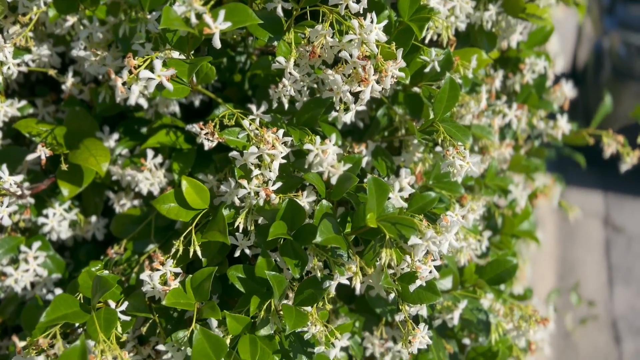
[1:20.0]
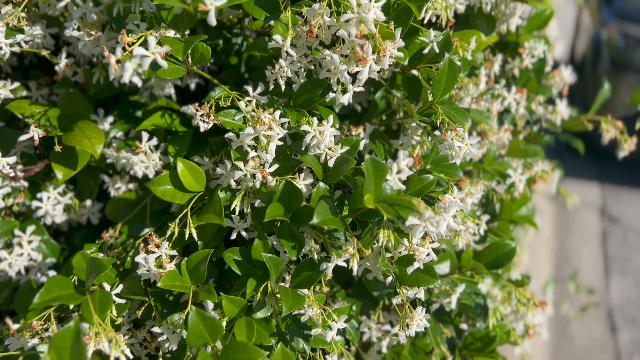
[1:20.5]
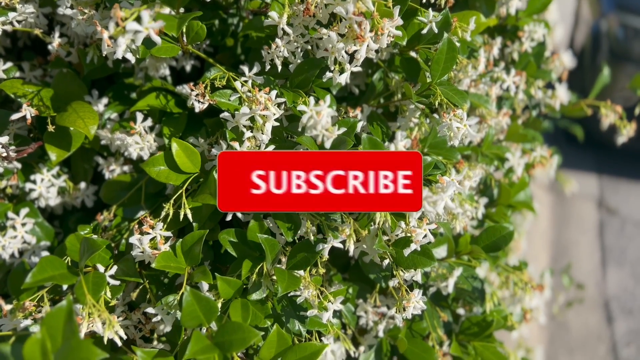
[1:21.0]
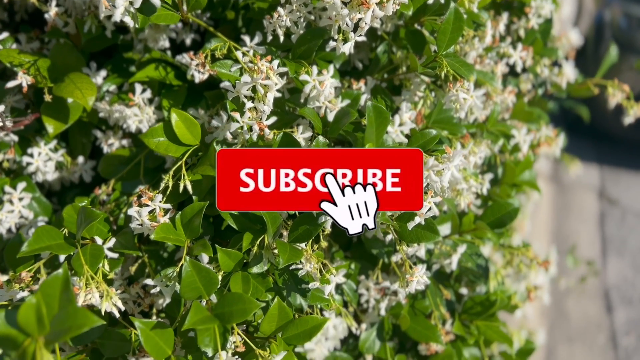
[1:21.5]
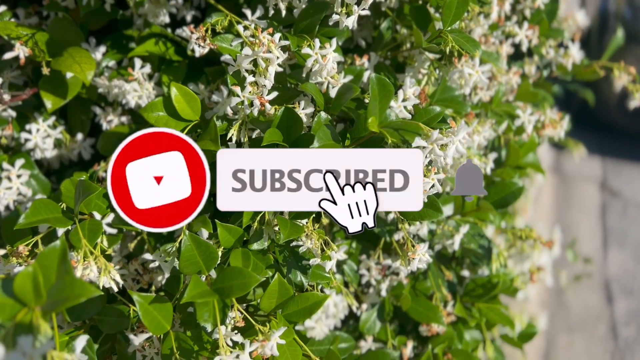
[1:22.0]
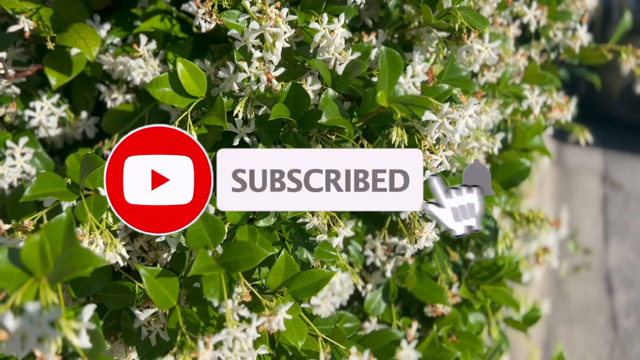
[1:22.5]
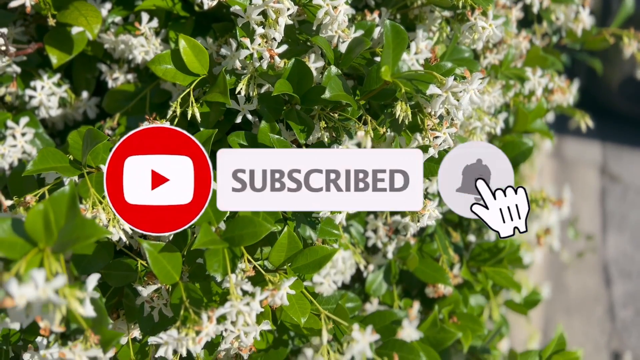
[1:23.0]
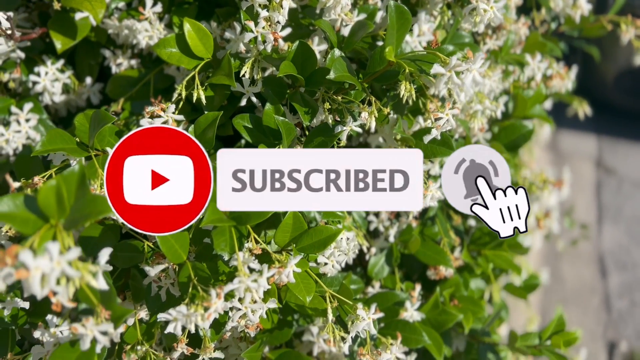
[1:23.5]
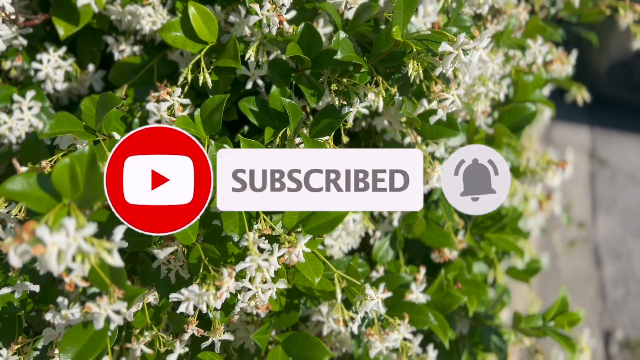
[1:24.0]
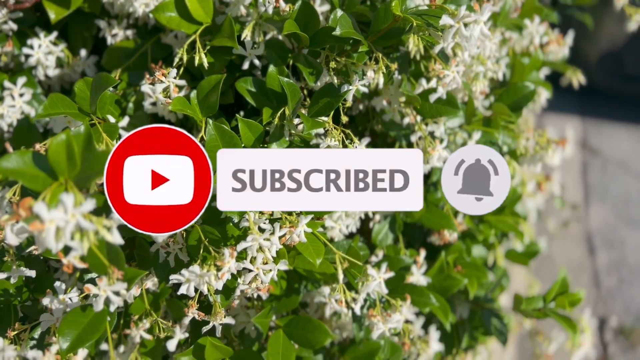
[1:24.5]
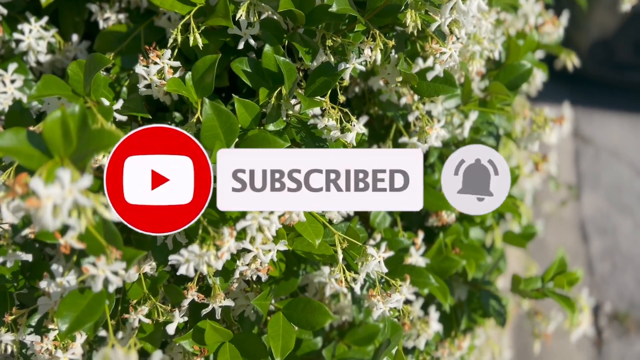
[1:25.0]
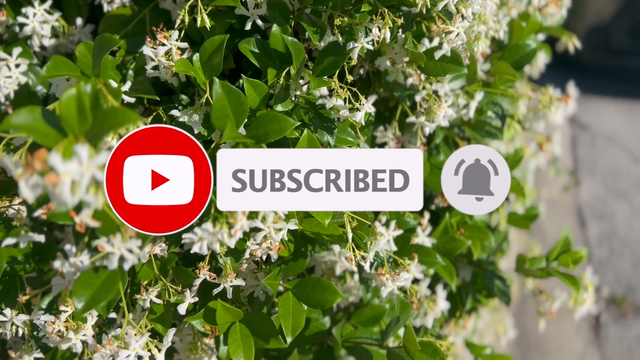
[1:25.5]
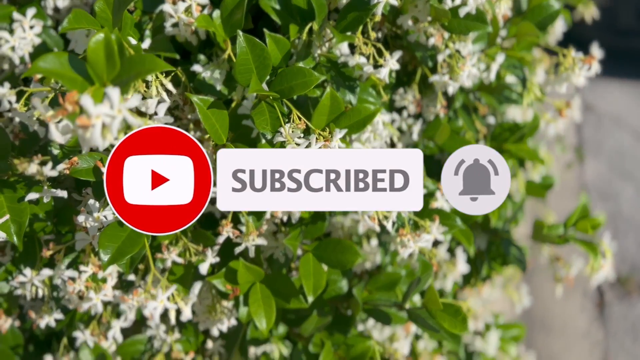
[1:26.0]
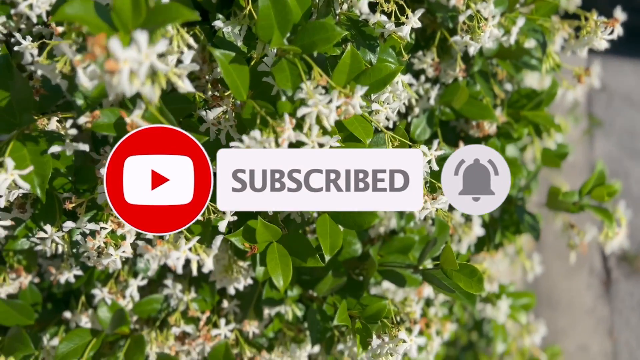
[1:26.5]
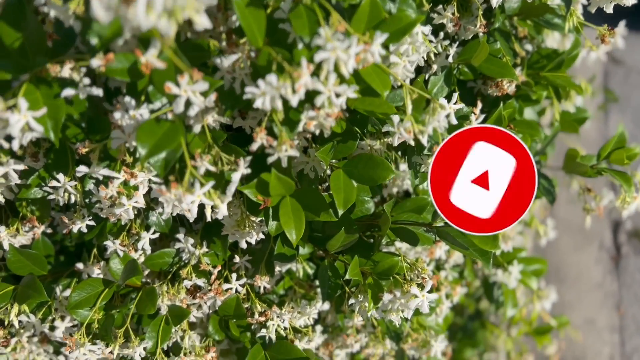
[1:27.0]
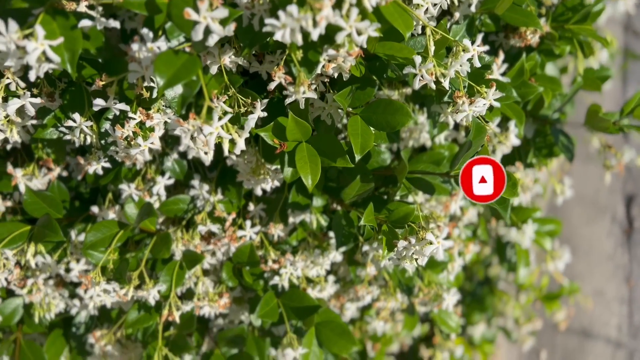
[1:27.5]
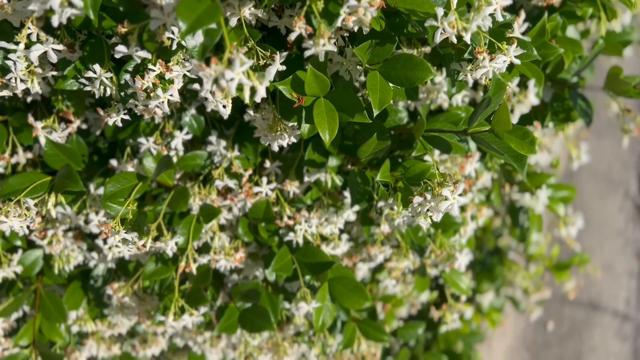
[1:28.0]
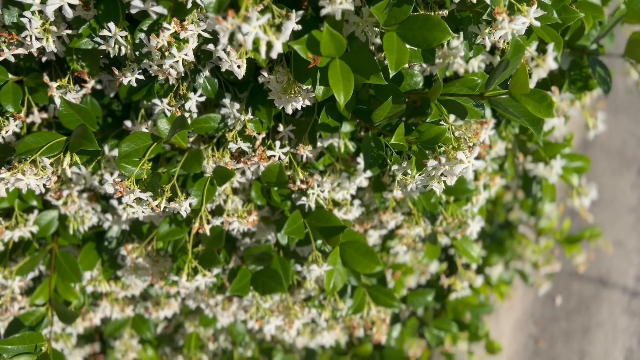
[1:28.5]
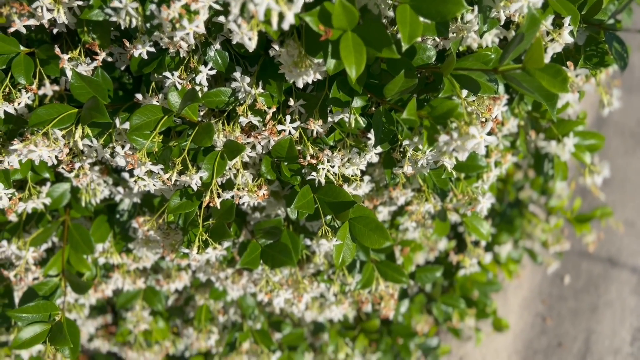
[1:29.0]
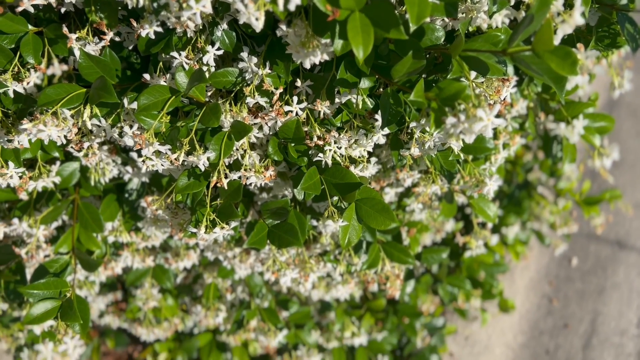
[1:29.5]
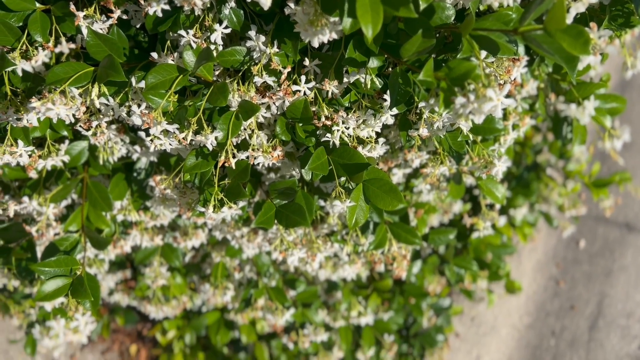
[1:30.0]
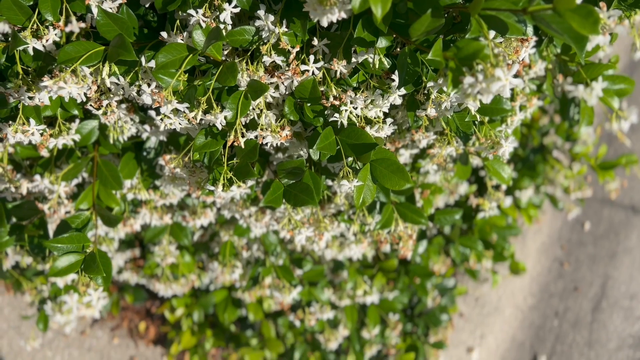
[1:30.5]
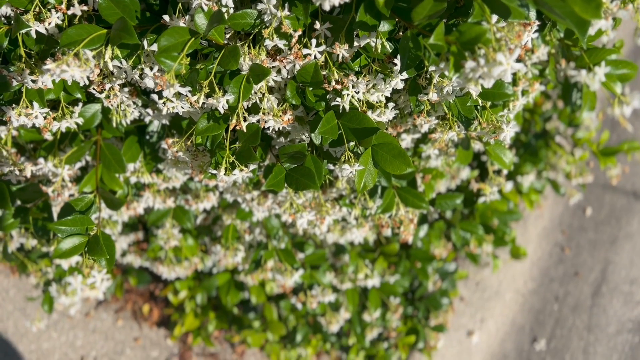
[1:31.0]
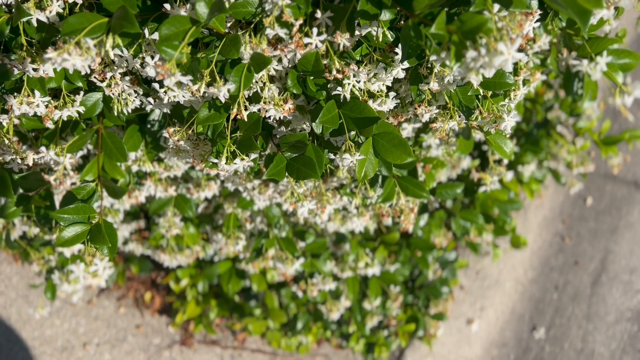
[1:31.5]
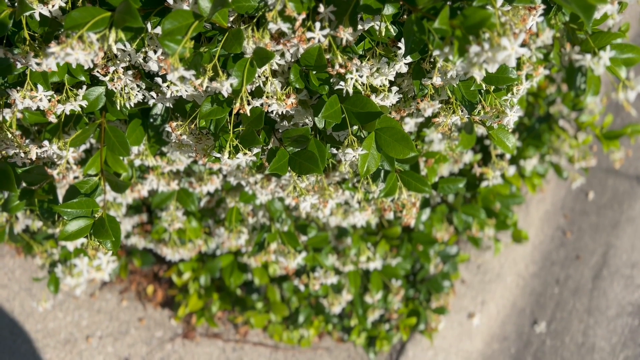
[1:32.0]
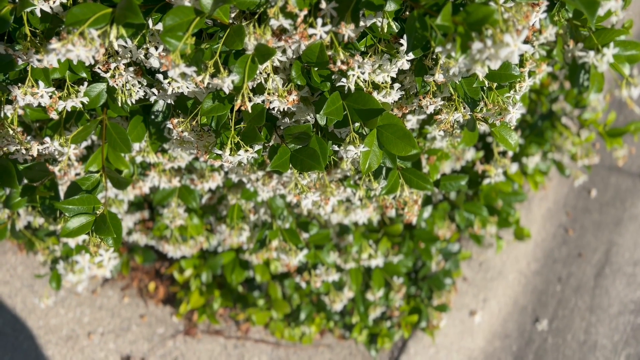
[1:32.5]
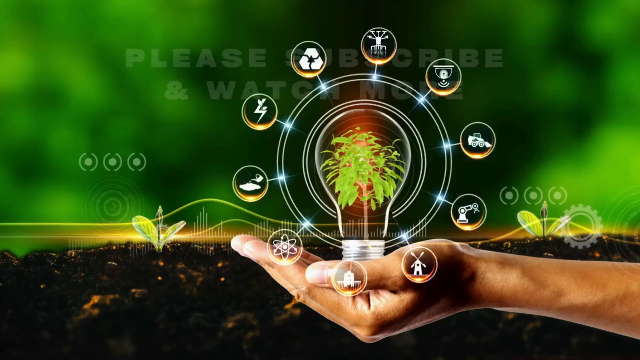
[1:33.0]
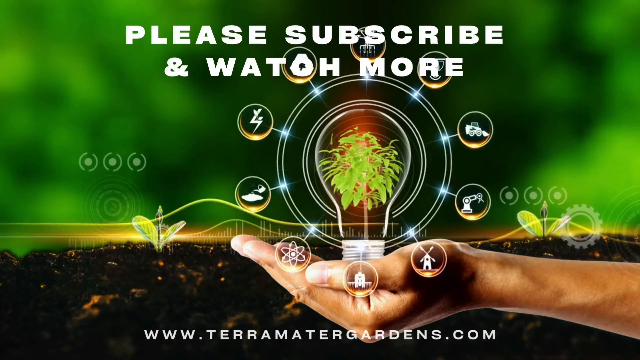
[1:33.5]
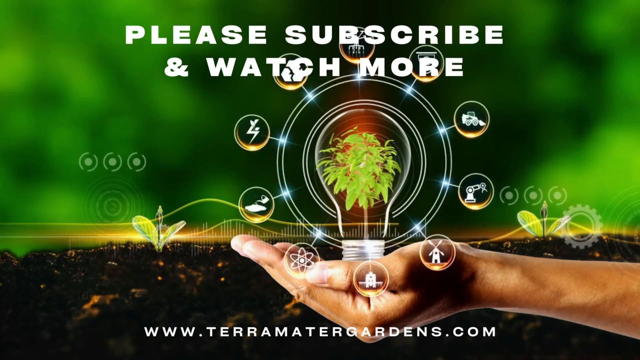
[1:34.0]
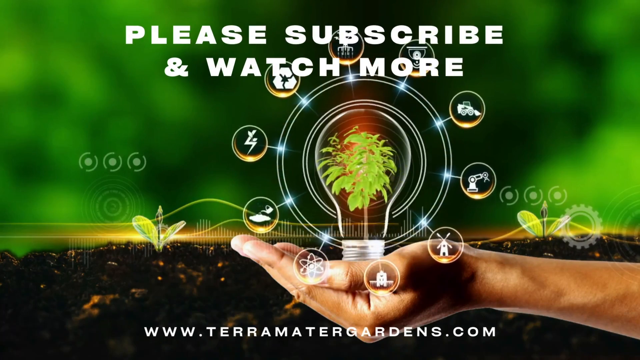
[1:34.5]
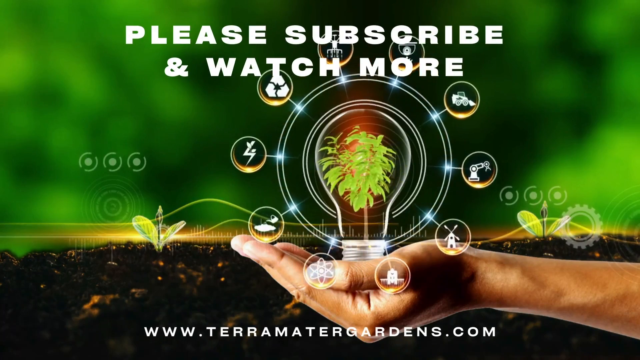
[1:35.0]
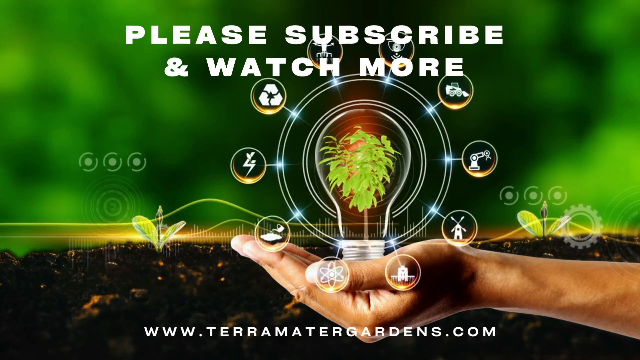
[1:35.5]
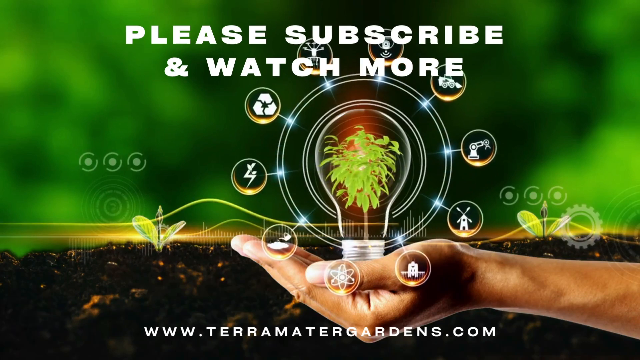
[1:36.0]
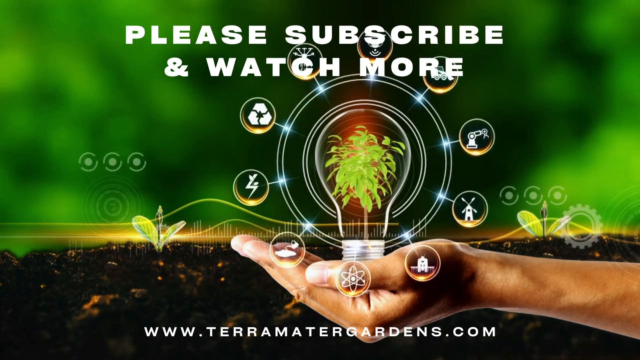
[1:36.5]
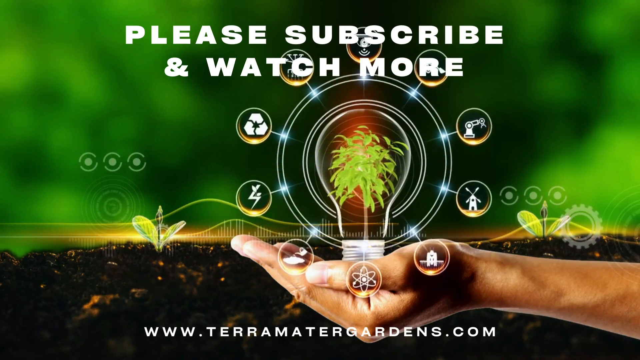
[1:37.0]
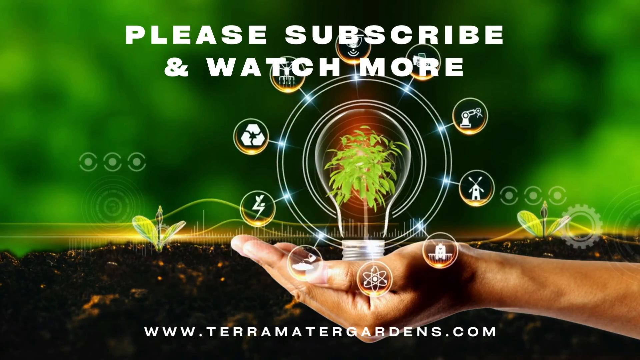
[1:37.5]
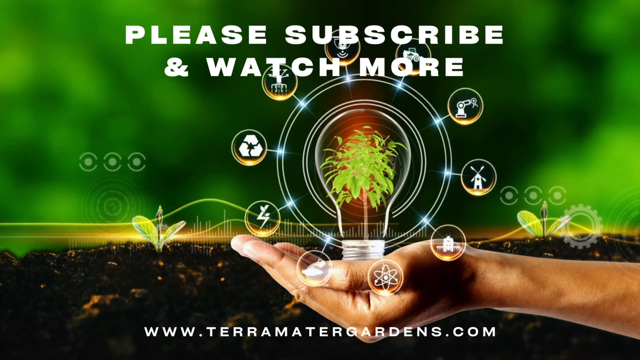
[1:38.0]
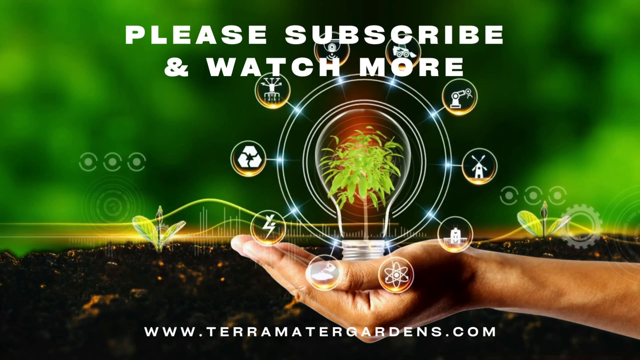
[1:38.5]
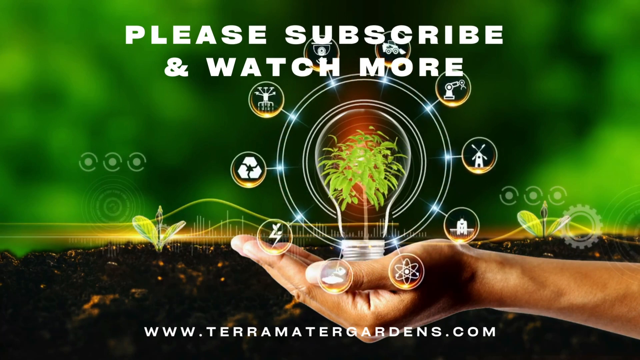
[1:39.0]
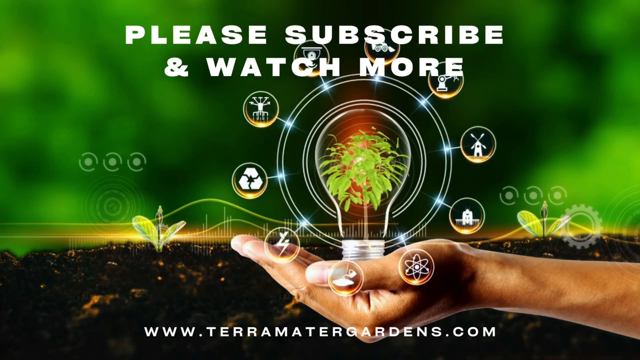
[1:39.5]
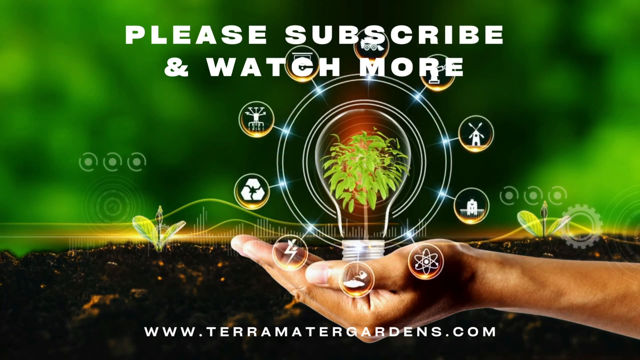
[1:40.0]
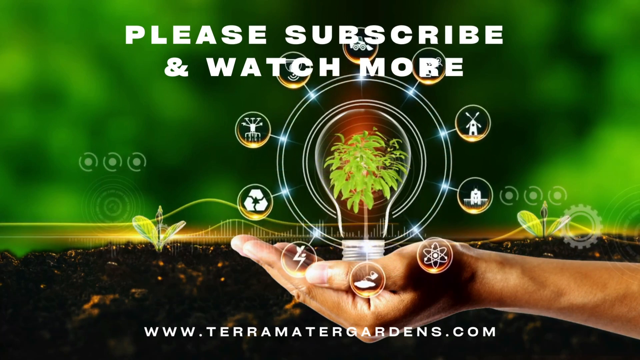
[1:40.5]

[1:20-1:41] The plants appear to be the same ones as before. The camera moves down, and as it does, a YouTube subscribe button pops up along with a silver bell. The camera moves around, with what looks like natural sunlight hitting the flower, apparently star jasmine confederate.